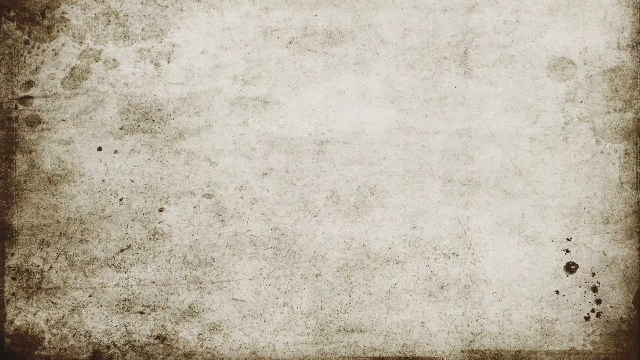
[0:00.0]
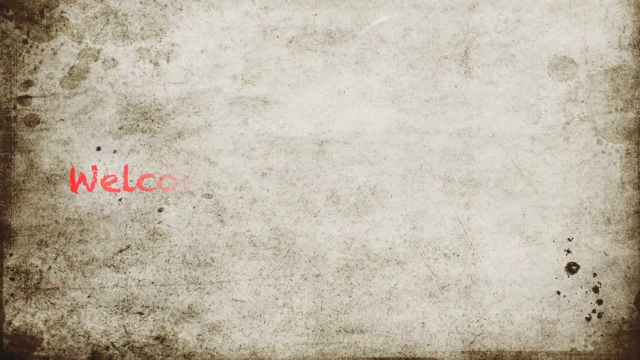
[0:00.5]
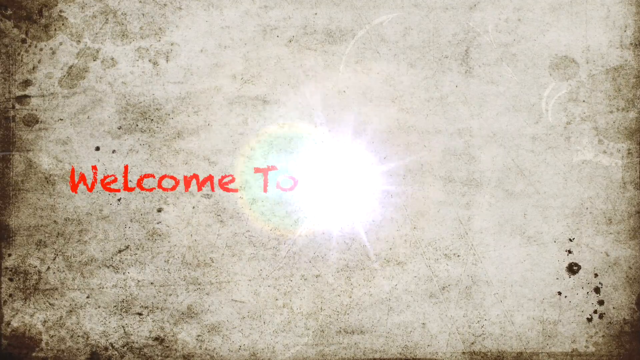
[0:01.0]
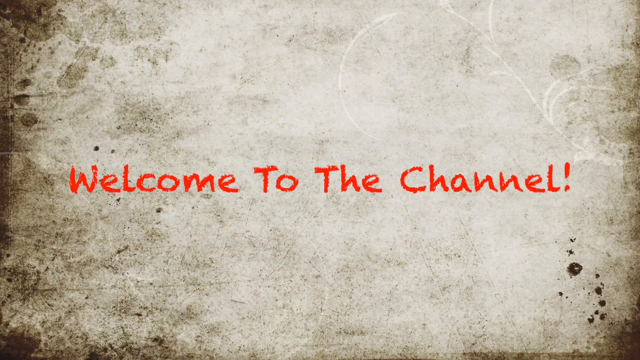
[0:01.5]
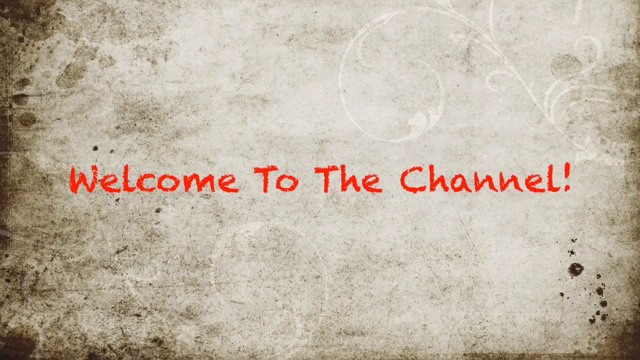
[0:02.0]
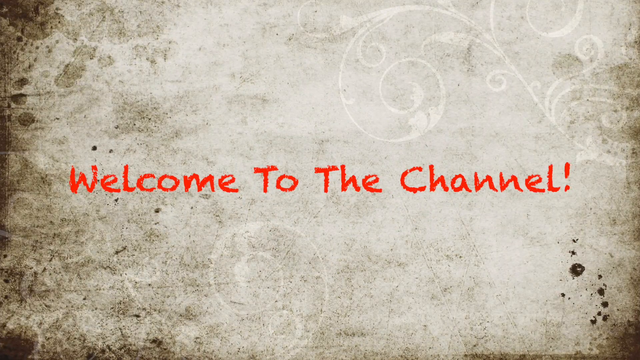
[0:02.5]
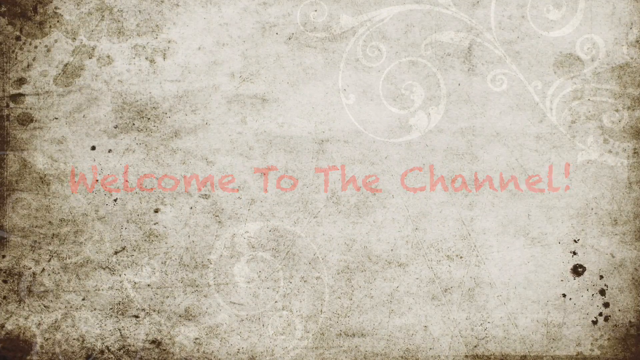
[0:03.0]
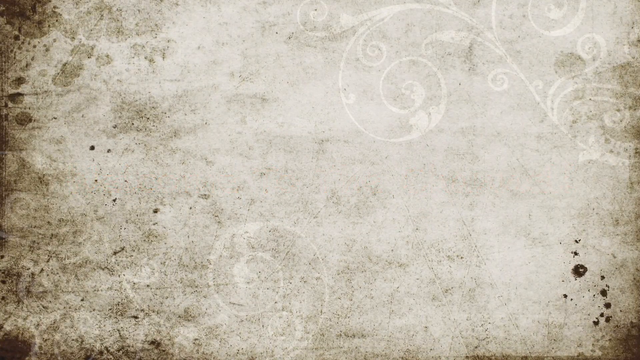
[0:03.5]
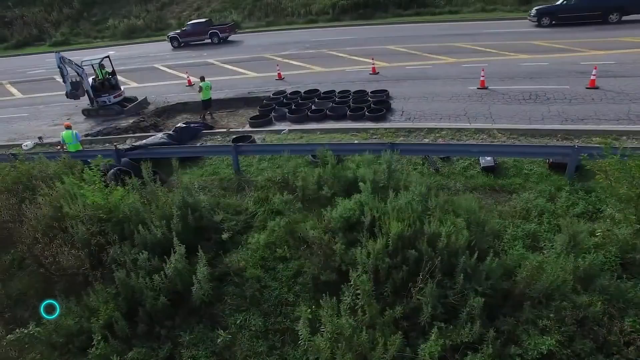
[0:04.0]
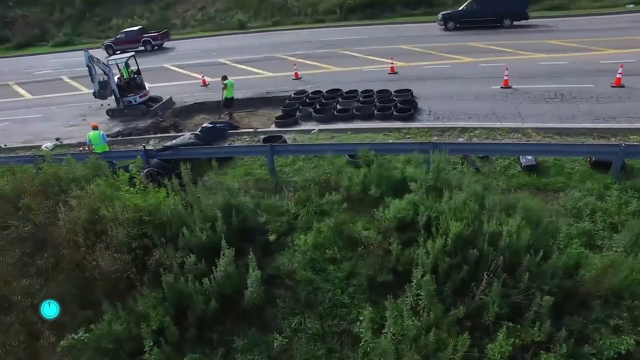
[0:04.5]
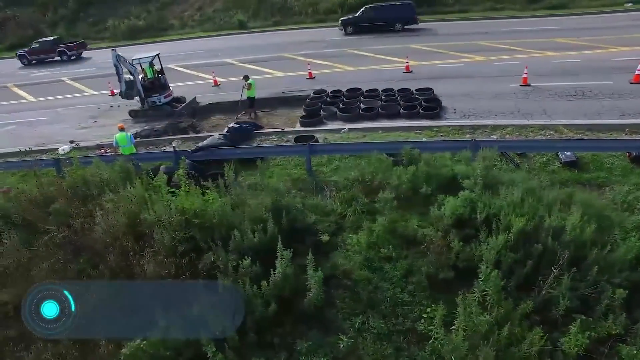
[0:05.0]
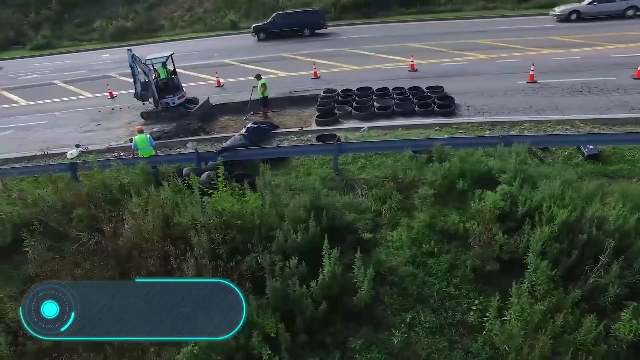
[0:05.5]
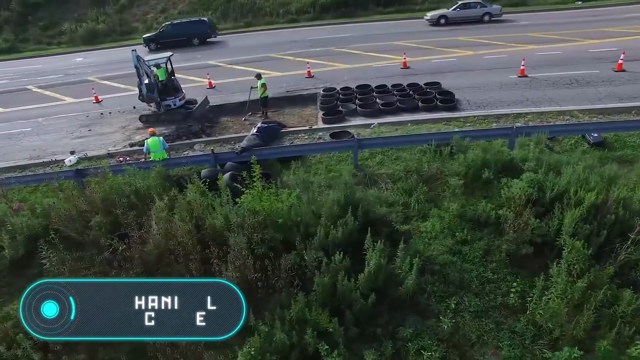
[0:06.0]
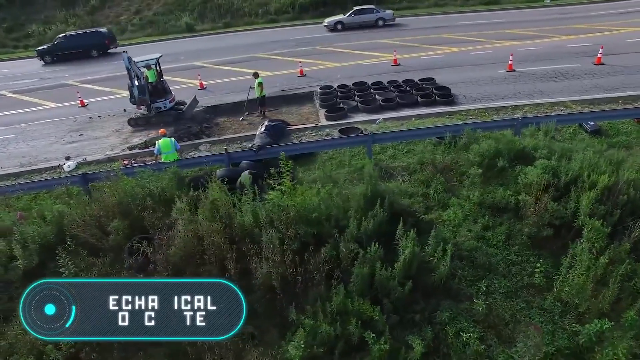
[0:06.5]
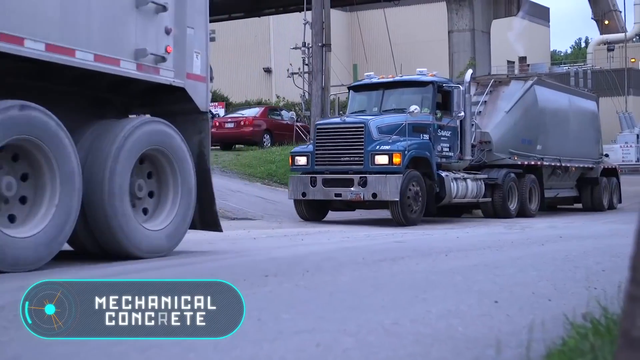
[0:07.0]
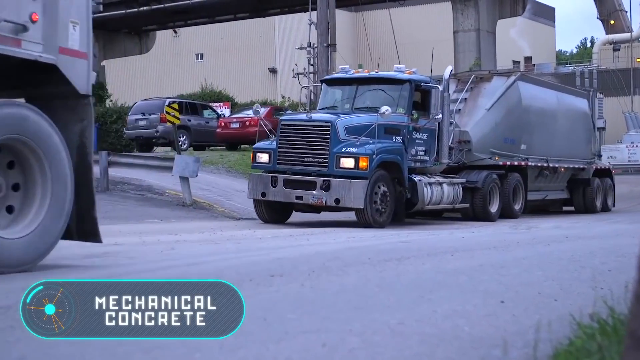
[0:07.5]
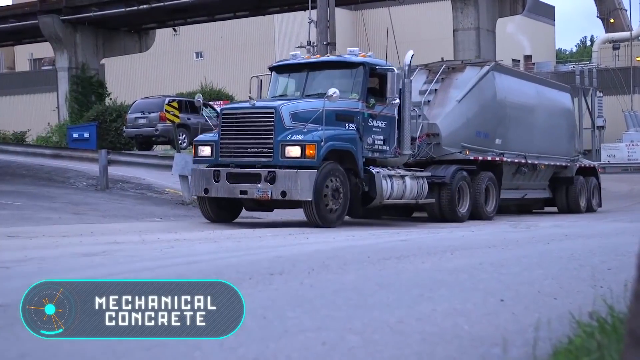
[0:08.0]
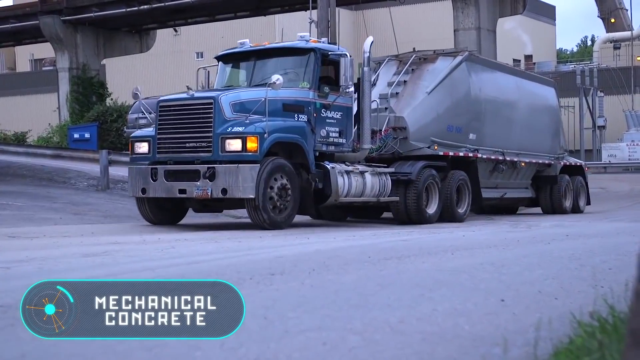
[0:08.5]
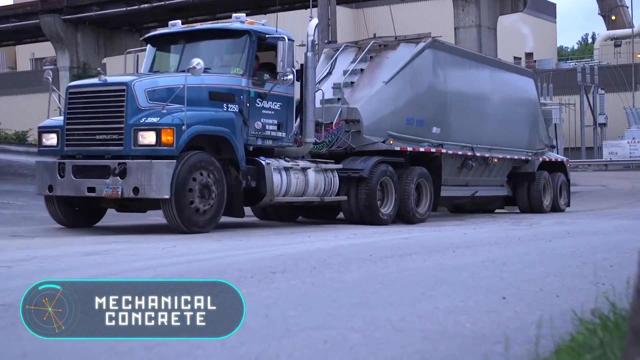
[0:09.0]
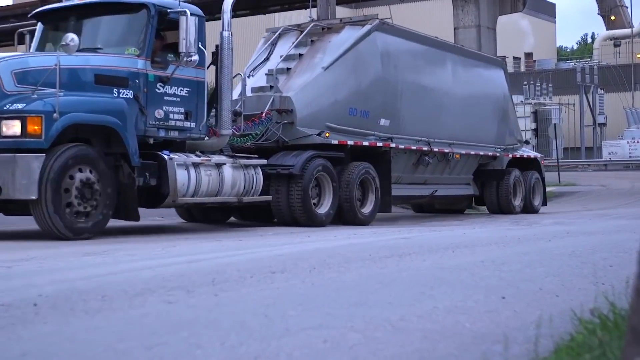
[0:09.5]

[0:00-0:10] A rough wall texture forms the background, resembling a wall that has not been cleaned in a while, with sort of brownish stains. An animation plays in which red text in a sort of crayon-written style, with rough coloring, appears and reads "welcome to the channel." The text disappears and the video transitions to a helicopter or drone shot of a group of workers on a part of a road close to the camera. Traffic cones separate the section they are working on from the traffic lanes further back. One man is sort of standing in an area the digging machine has dug out. To his right are seven columns of stacked black tires; some are coupled up and some are single tires on the ground. The workers wear glowing neon, almost green safety vests. In the bottom left, an animated bar with circular ends appears, reading "mechanical concrete." While the text is shown, the scene changes to dump trucks, probably carrying concrete, driving to the left.